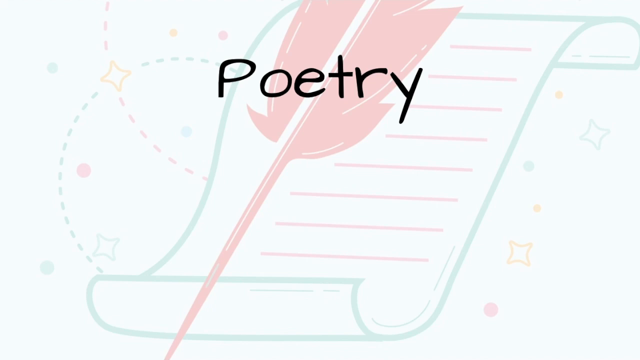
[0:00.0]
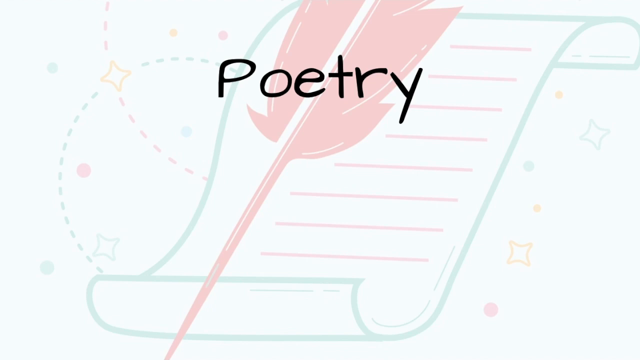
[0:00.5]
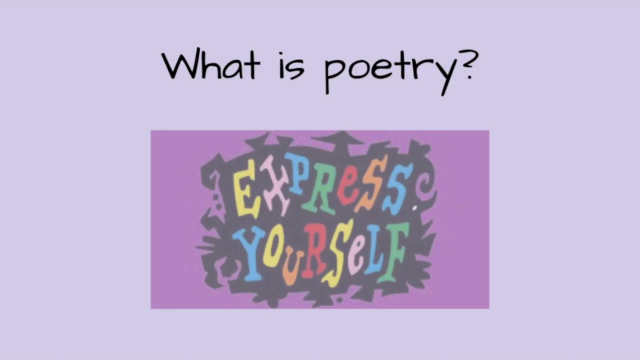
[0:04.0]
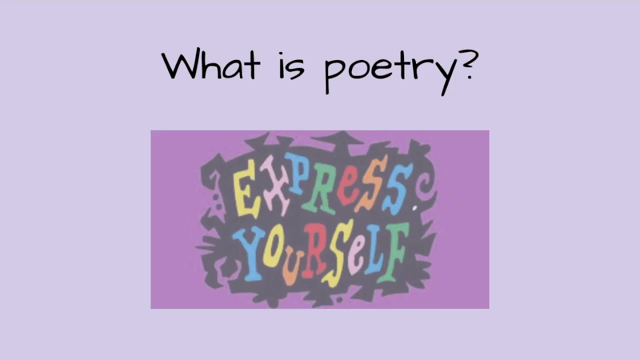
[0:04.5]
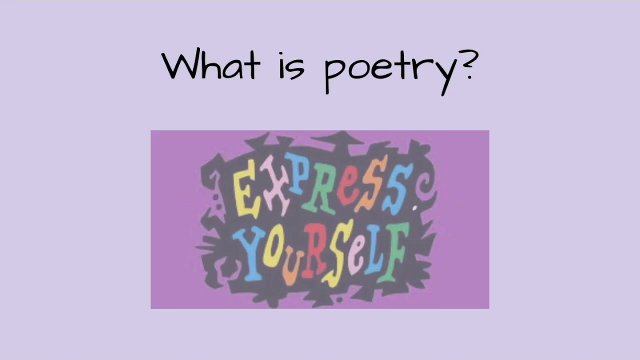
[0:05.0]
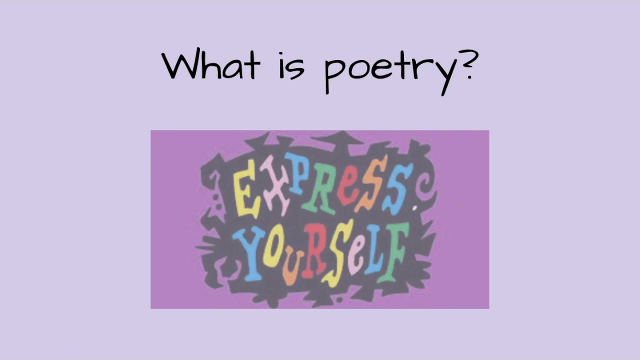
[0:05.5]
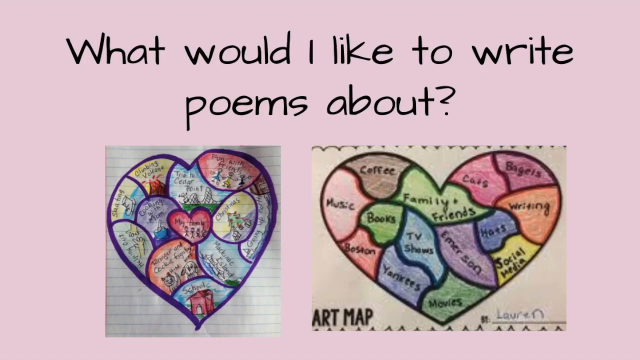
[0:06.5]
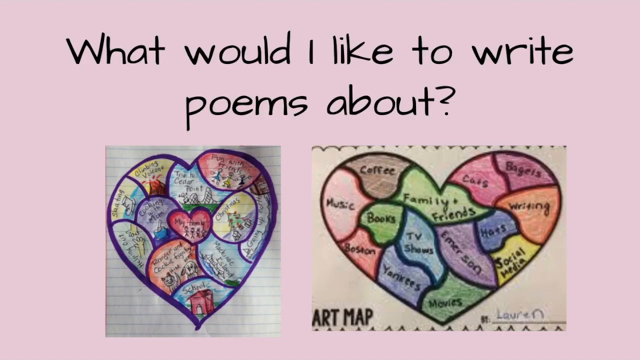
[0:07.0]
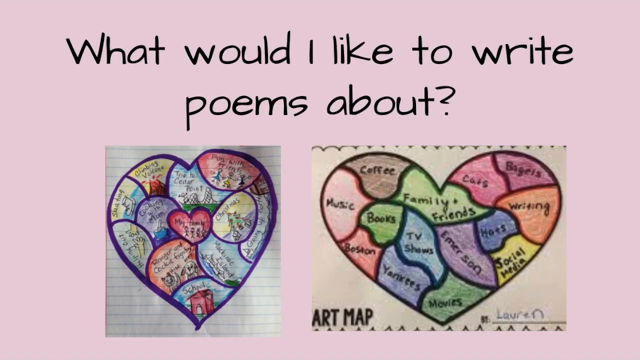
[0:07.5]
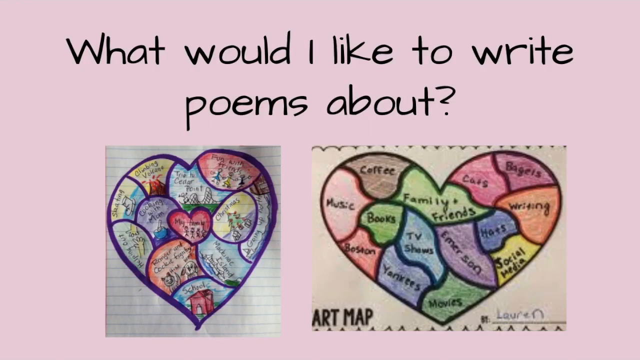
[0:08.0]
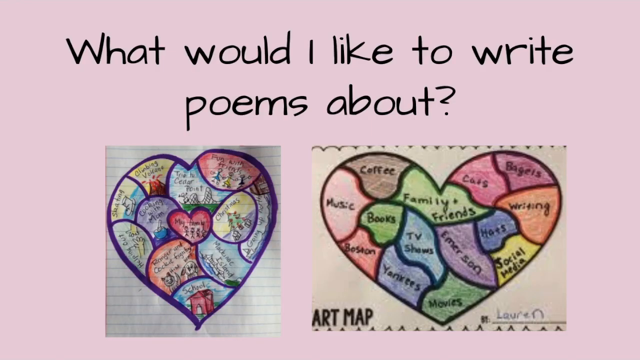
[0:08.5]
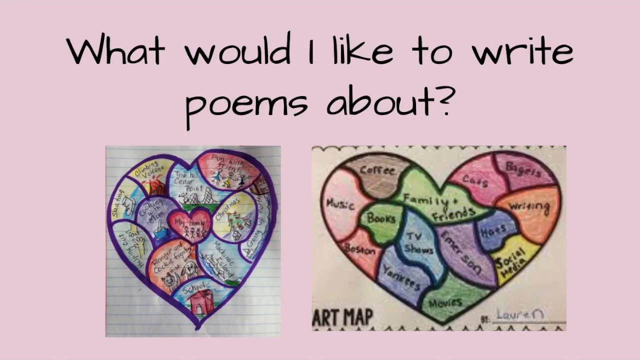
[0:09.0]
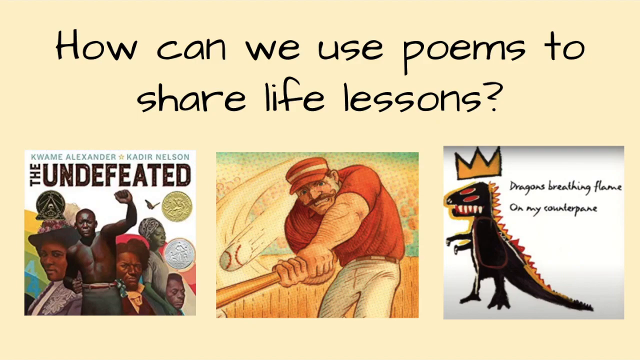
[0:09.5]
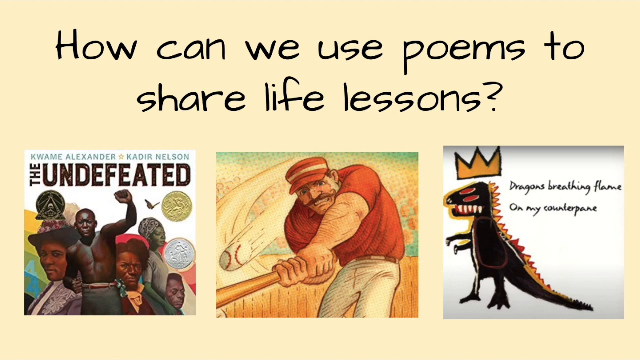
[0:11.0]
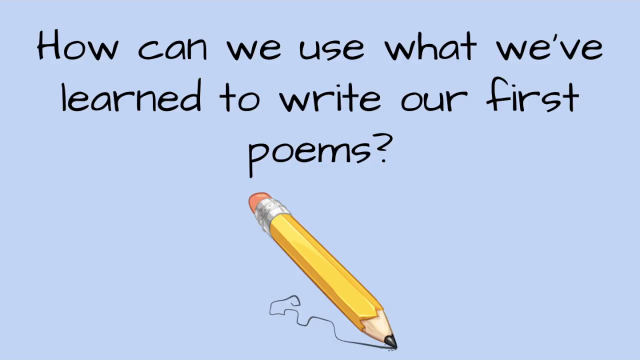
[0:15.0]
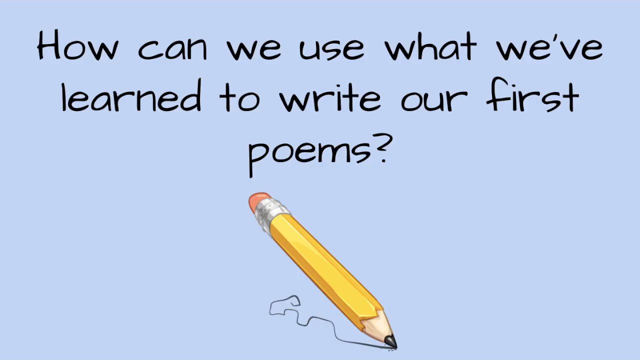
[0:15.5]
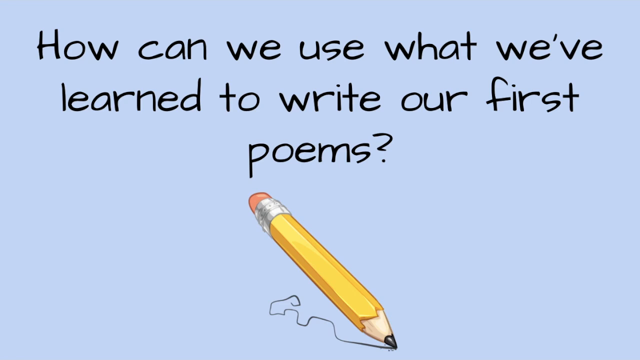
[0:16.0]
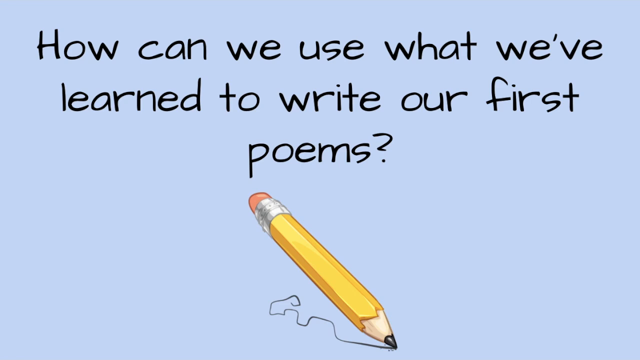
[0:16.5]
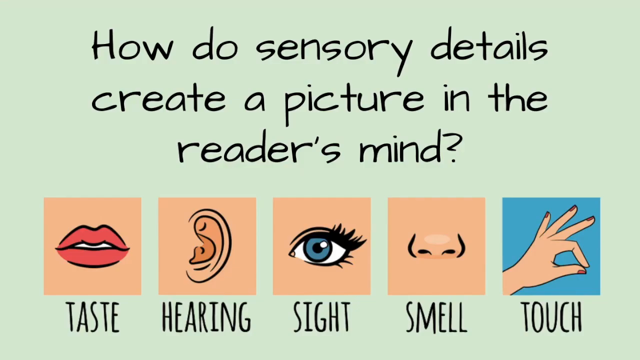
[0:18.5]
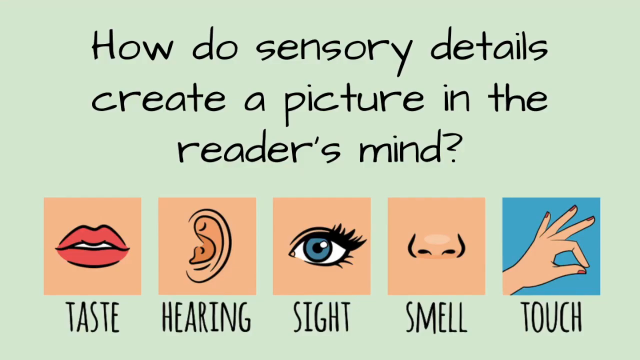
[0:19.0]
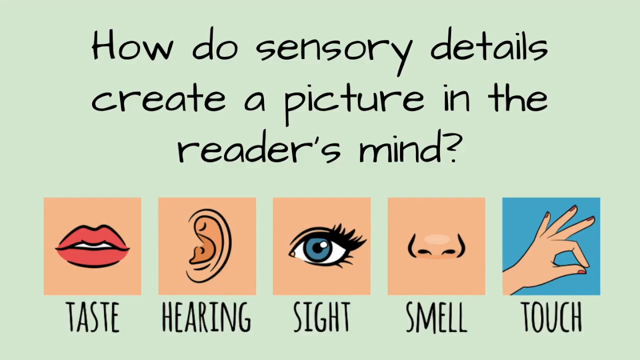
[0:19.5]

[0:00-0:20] An animated background shows a sort of note and a feather pin/quill with the word "poetry" in black text. It transitions to a screen with black text reading "What is Poetry?" on a kind of light purple background, followed by an image with the text "Express Yourself" in letters of multiple colors, including yellow, pink, blue, green, red, and orange. Next comes a screen with a pink background and black text showing two heart maps, with sort of different information in each heart; text reading "Coffee, Books, Music, Writing, Cats" appears in different segments of the heart. Another screen with a kind of yellow background reads "how can we use poems to share life lessons?" and shows kind of three images: one of an African American individual, one of a white kind of male playing baseball, and one of a sort of animated dinosaur being drawn, wearing a crown. The video then moves to a kind of screen with a pencil and light blue and black text. After that, a last screen shows the lips, ears, eyes, nose, and hands of a female in a sort of animated-looking style, with a sort of green background and black text.